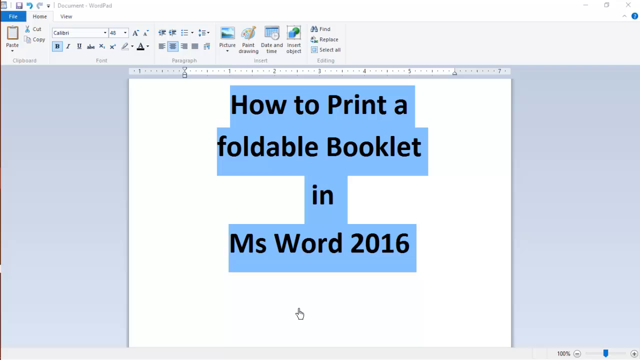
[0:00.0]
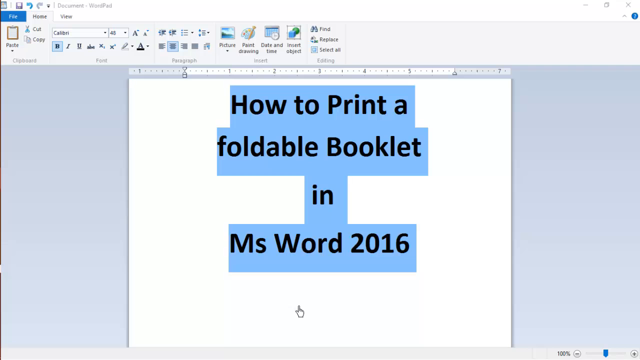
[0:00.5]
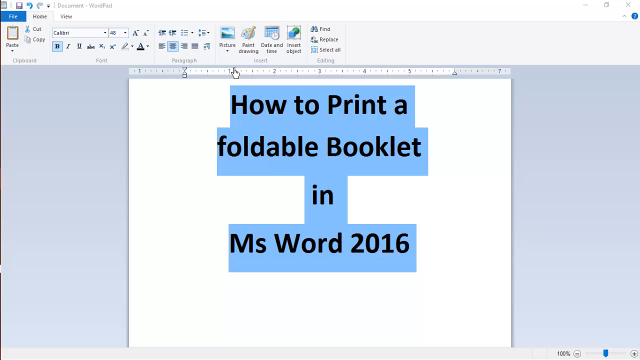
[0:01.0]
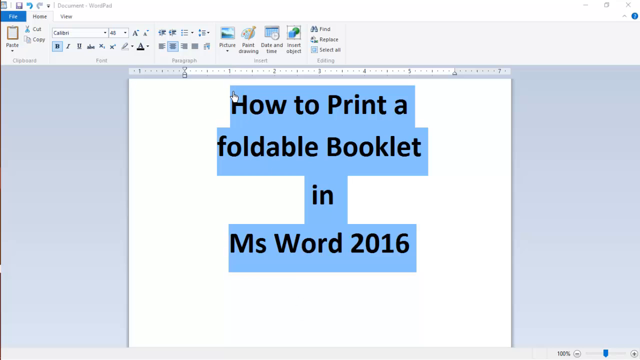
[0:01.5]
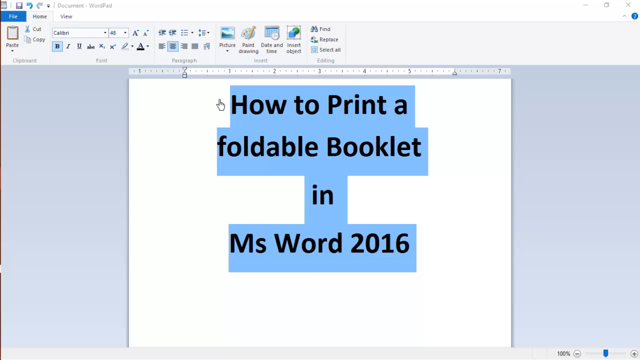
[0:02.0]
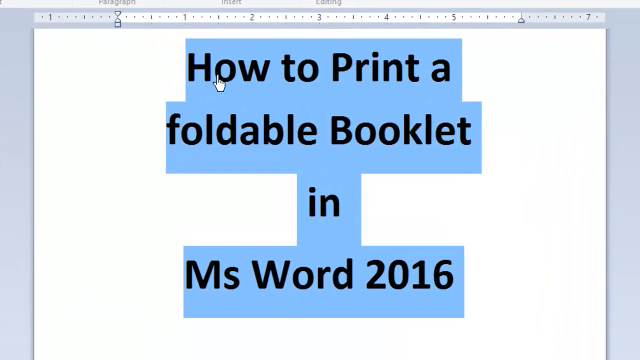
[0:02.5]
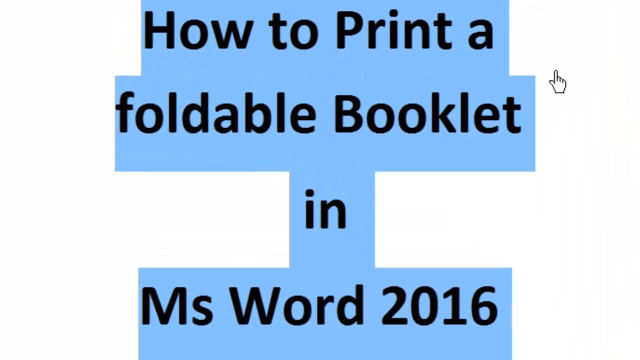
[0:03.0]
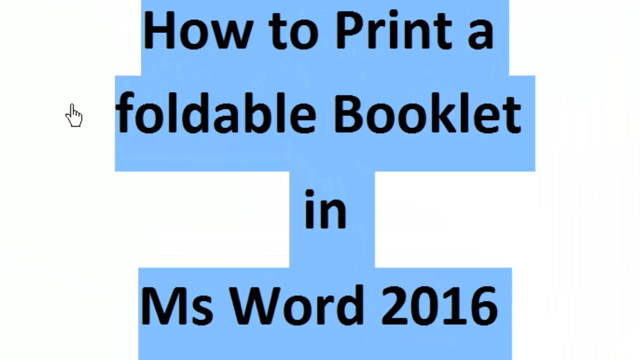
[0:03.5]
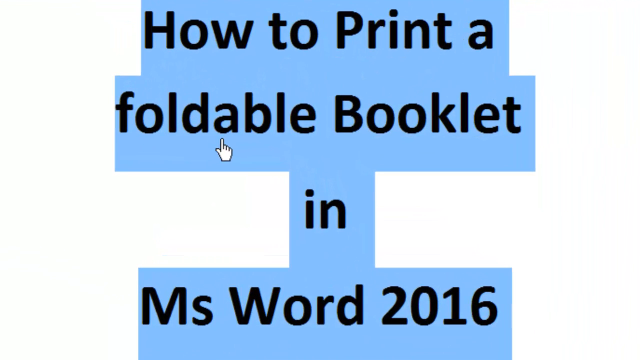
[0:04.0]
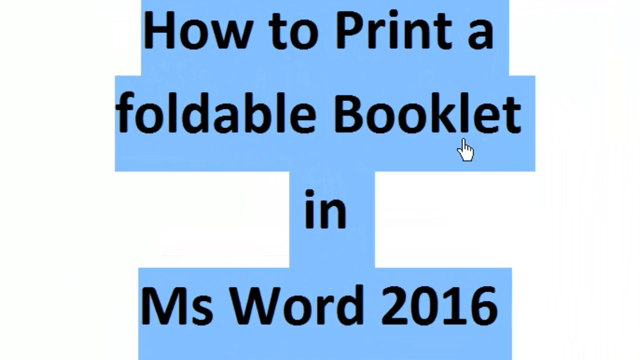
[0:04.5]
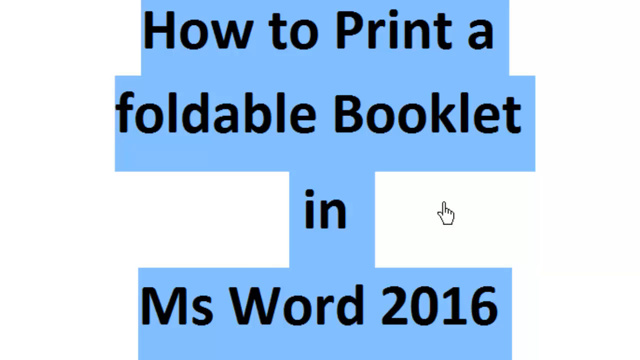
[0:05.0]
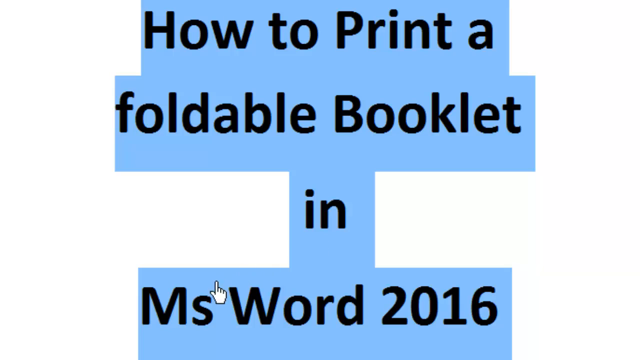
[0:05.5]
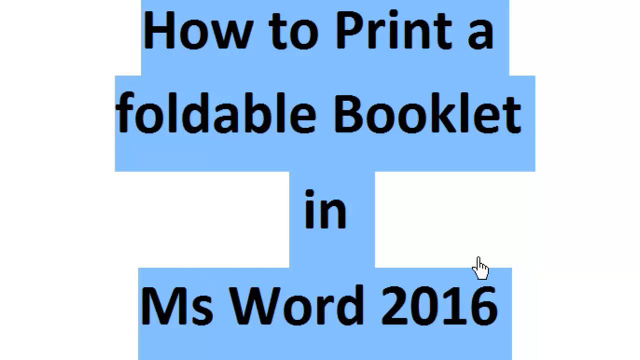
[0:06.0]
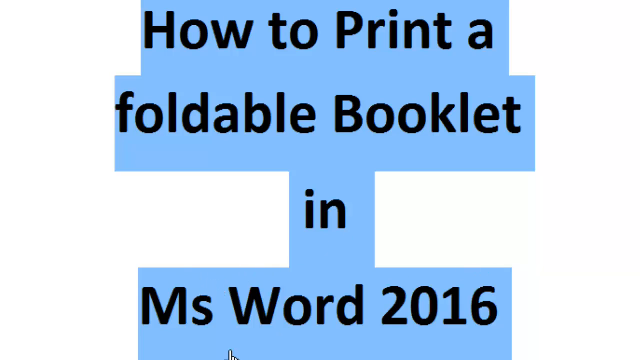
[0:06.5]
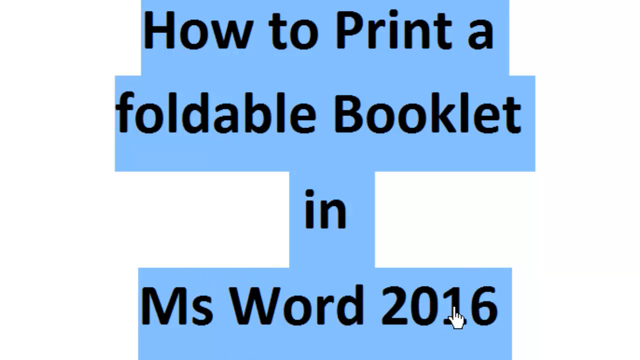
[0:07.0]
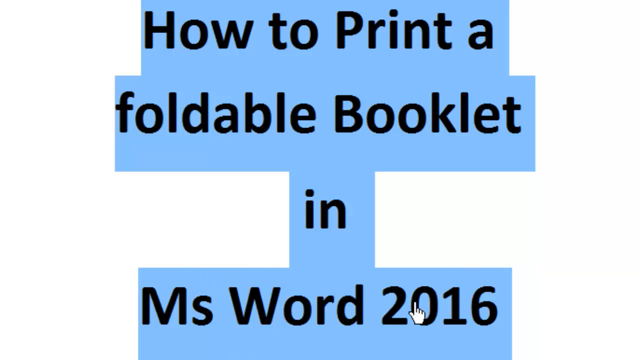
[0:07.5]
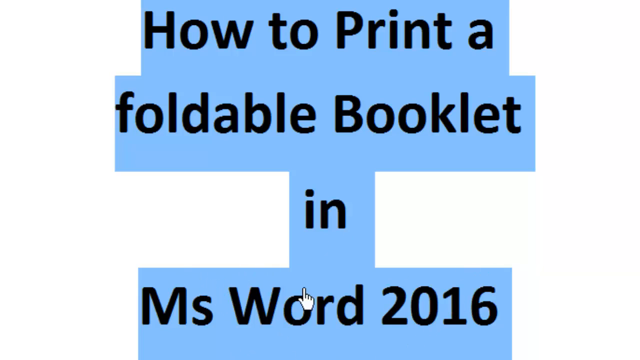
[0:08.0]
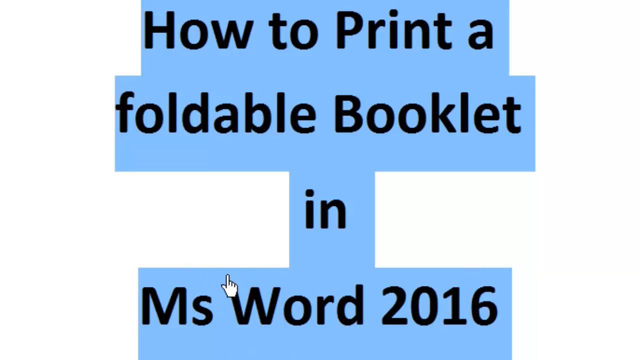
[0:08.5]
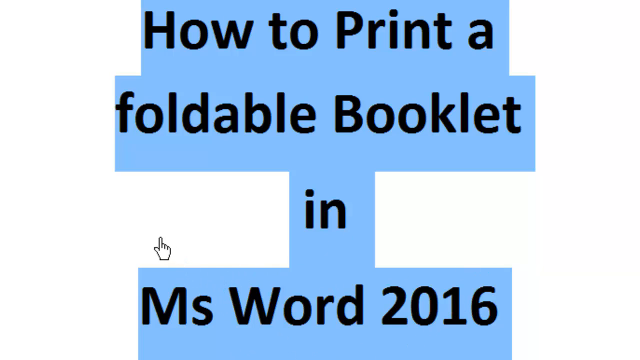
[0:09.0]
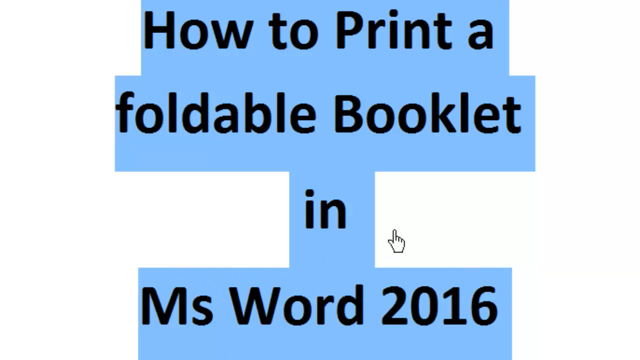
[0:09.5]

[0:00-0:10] Someone appears to be filming themselves using Microsoft Word. A mouse cursor shaped like a human hand with a pointing finger is on the screen. Behind the cursor is a blank Word document with typed words that read "how to print a foldable booklet in MS Word 2016," highlighted in blue. The camera zooms in on those words, and the mouse moves from left to right, back to the left, and to the right again, kind of zigzagging across the page almost as though it is maybe reading the script, before stopping around the middle.